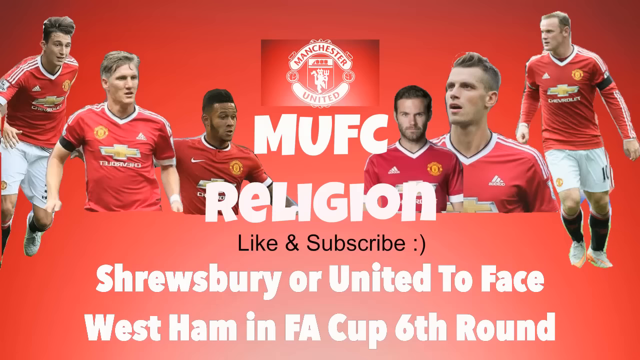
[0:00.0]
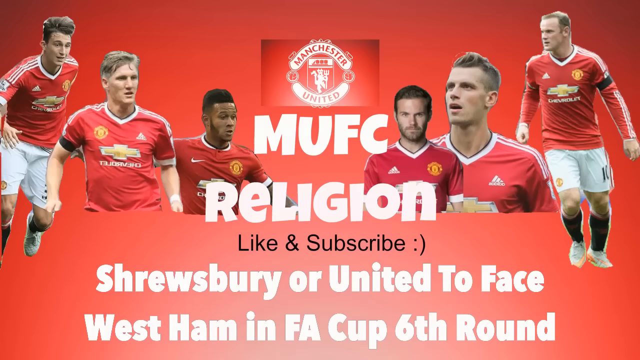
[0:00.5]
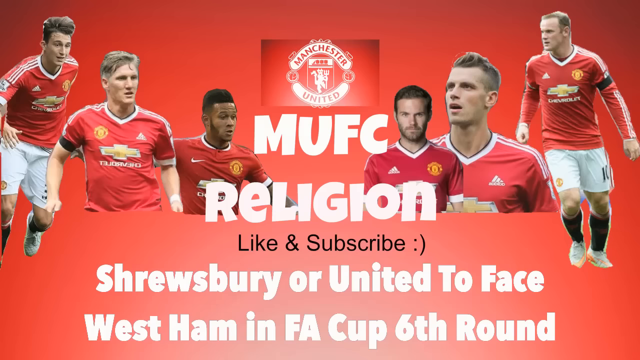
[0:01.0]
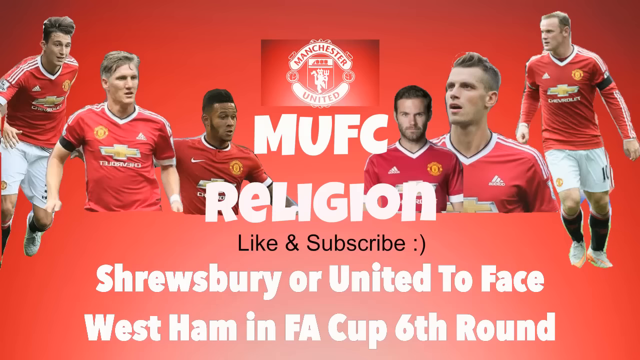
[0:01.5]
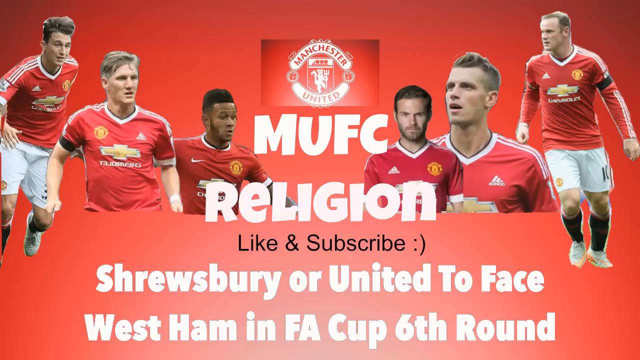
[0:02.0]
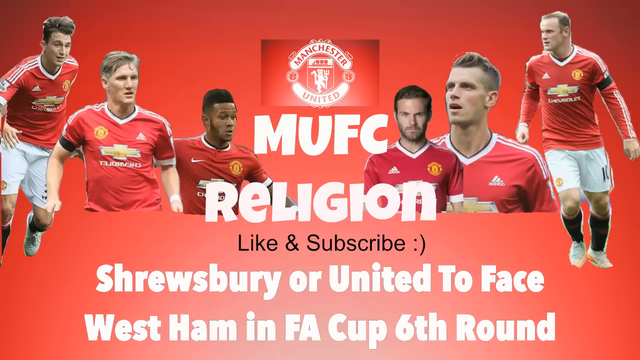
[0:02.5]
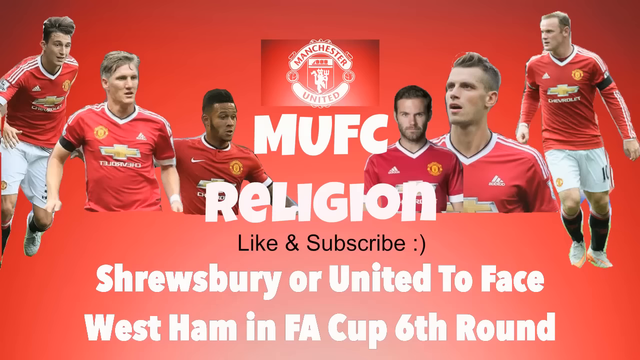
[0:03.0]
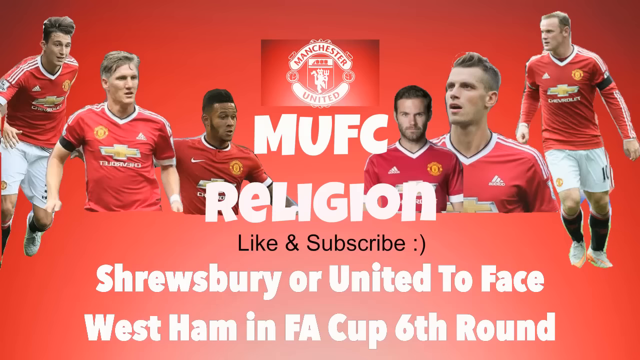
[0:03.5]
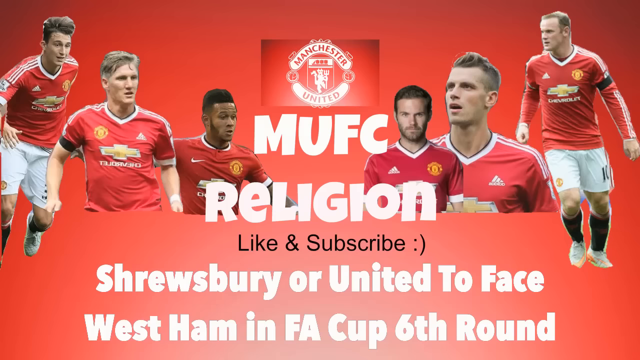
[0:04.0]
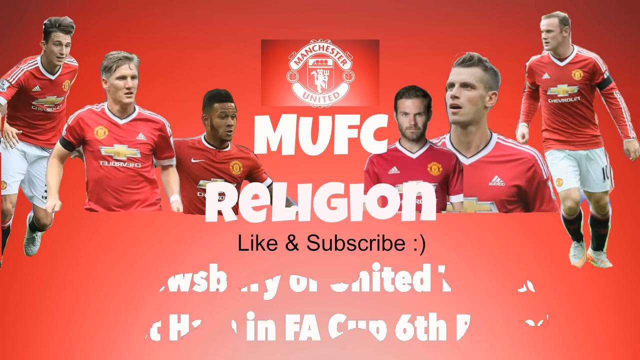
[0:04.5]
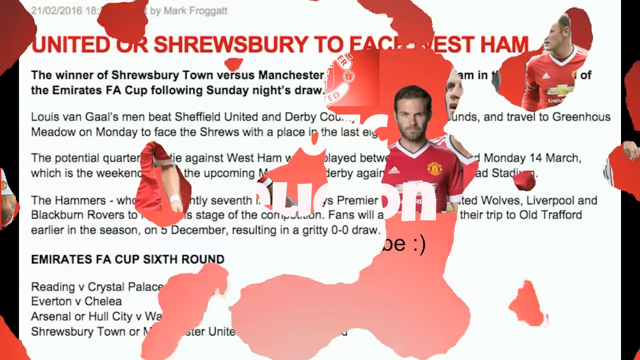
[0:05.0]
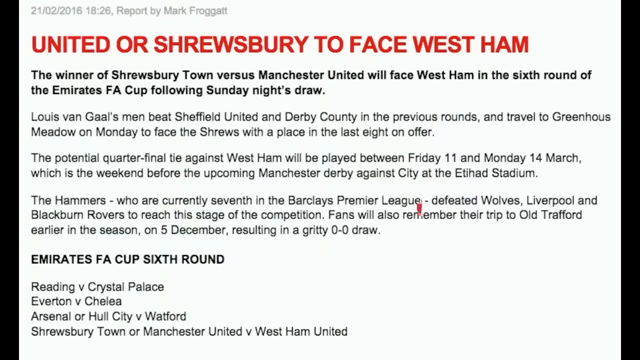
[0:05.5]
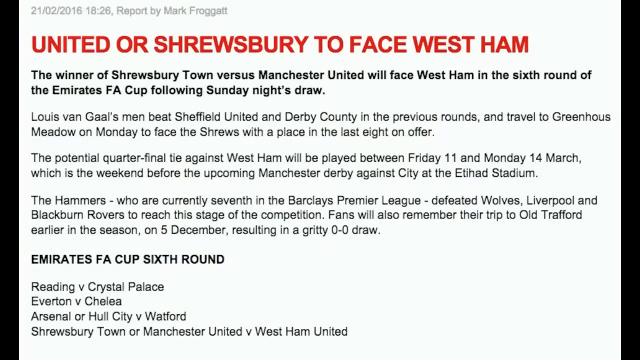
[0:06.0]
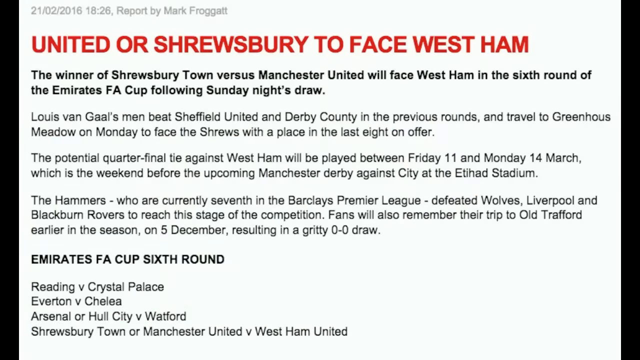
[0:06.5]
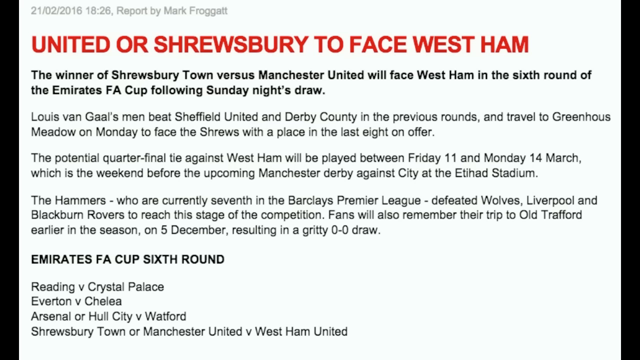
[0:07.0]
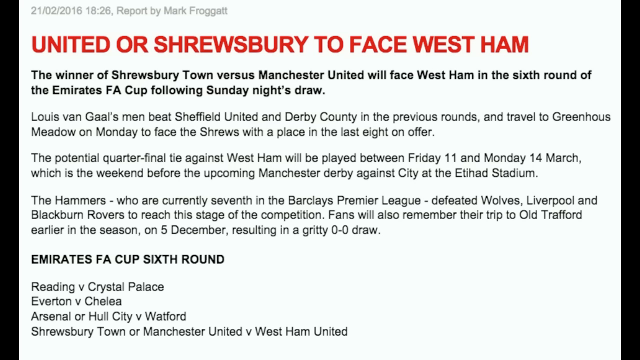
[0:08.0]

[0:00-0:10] What looks like some sort of advertisement, possibly for soccer players, gives way to writing. At the top, red text reads "United or Shrewsbury to face West Ham"; it looks like possibly a newspaper article. In bold letters underneath the red text, it reads "the winner of Shrewsbury Town versus Manchester United will face West Ham in the sixth round of the Emirates FA Cup following Sunday night's draw."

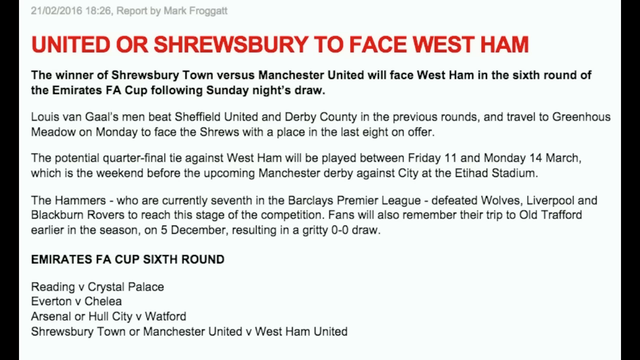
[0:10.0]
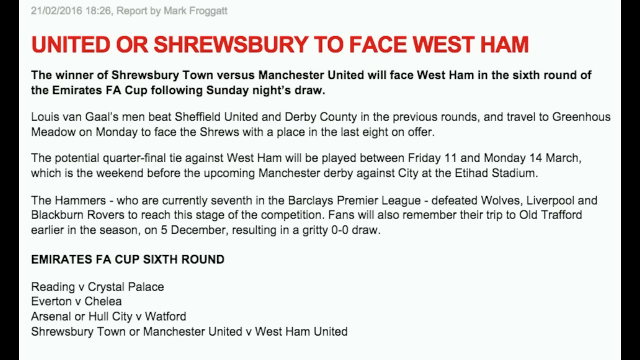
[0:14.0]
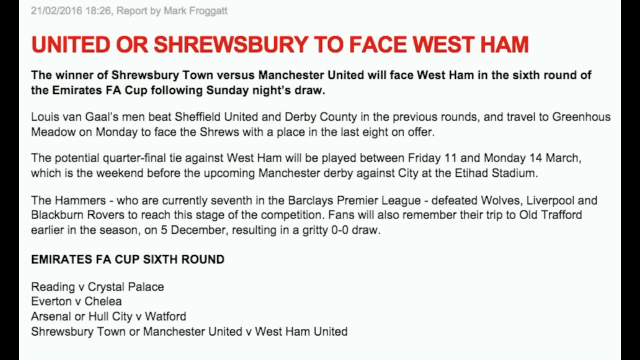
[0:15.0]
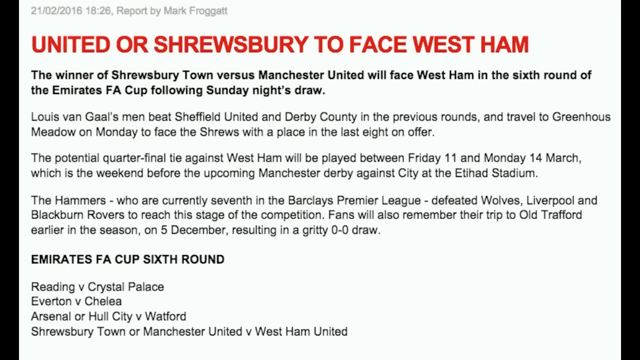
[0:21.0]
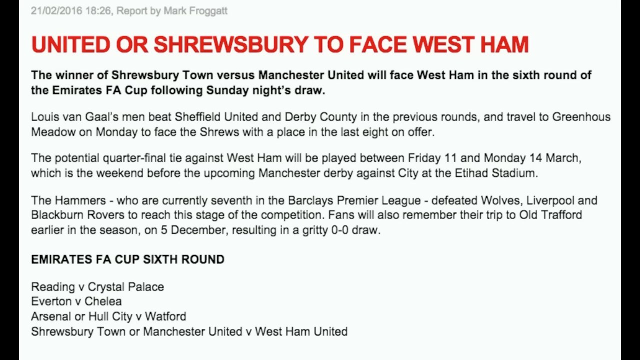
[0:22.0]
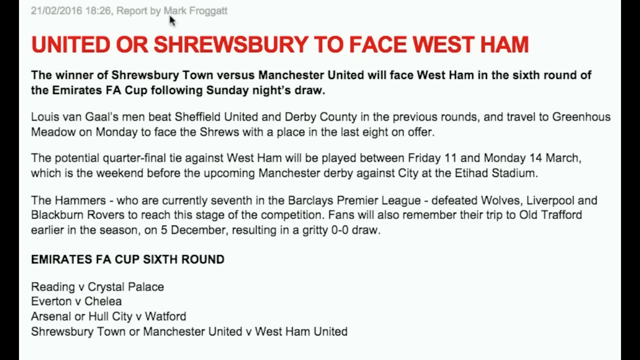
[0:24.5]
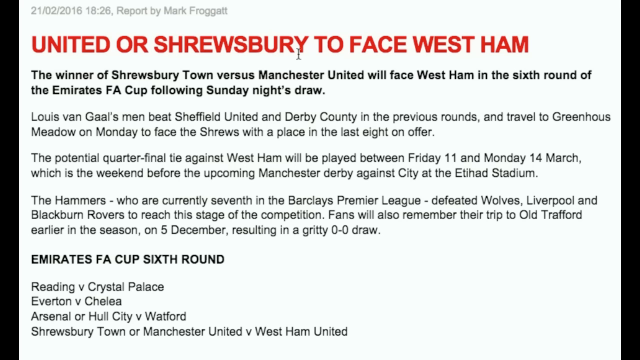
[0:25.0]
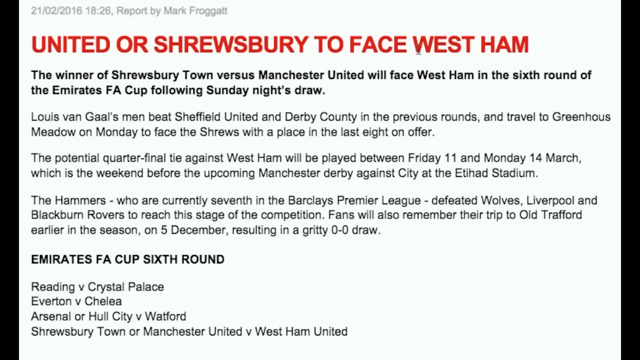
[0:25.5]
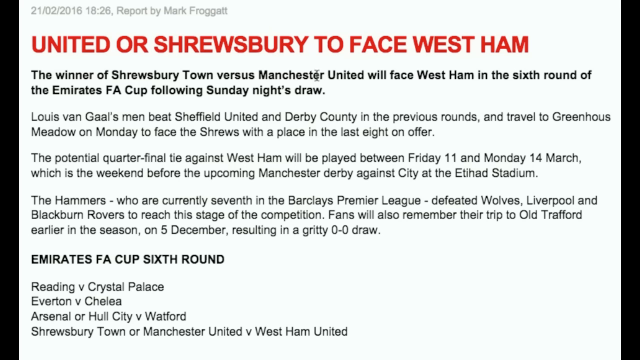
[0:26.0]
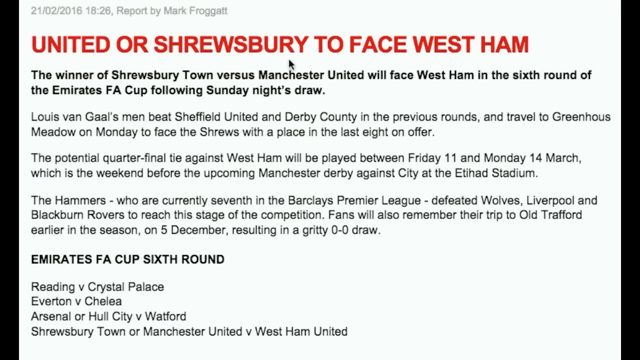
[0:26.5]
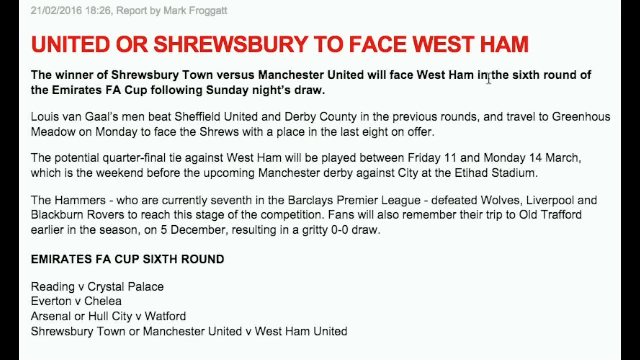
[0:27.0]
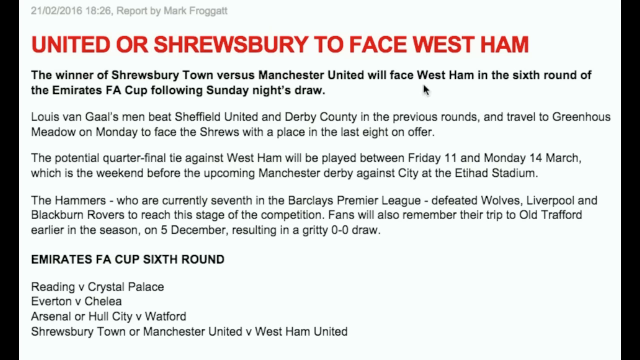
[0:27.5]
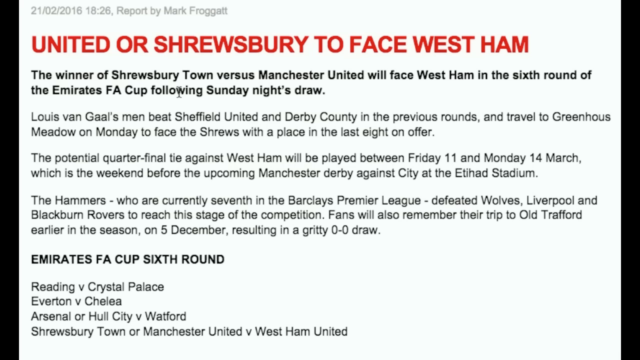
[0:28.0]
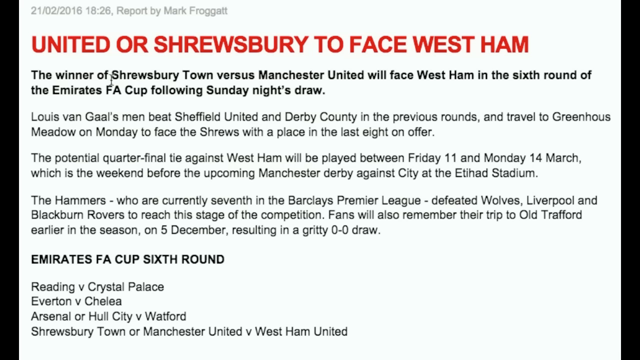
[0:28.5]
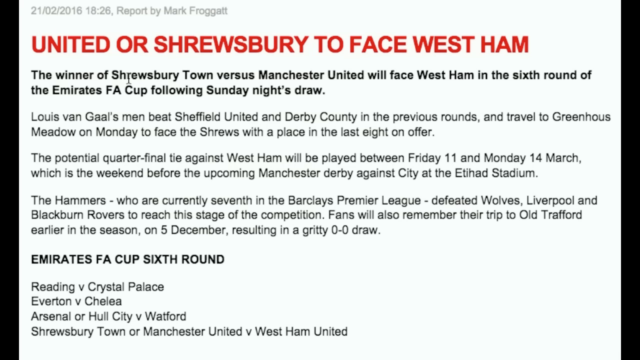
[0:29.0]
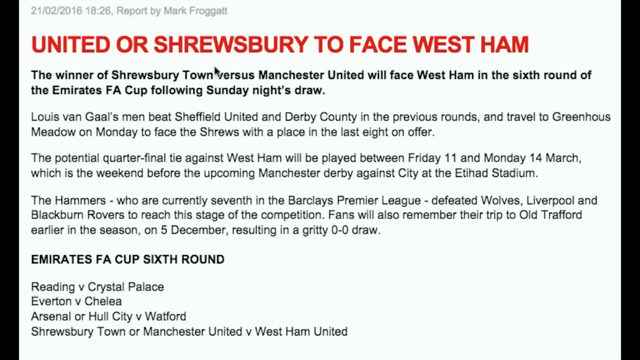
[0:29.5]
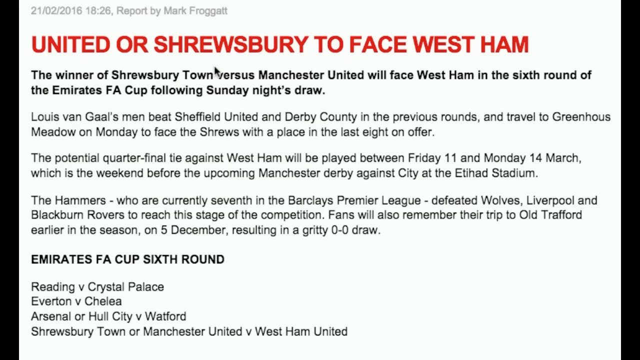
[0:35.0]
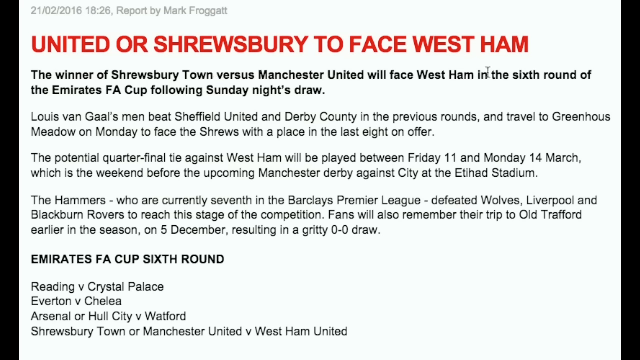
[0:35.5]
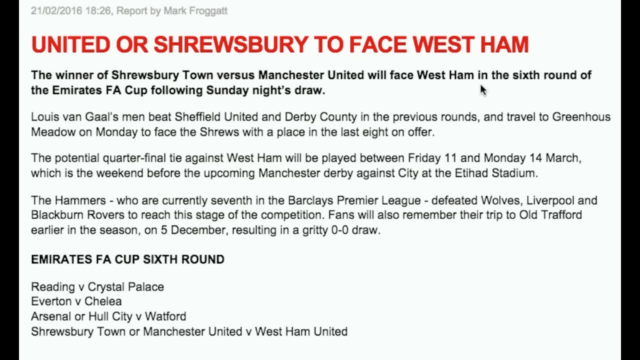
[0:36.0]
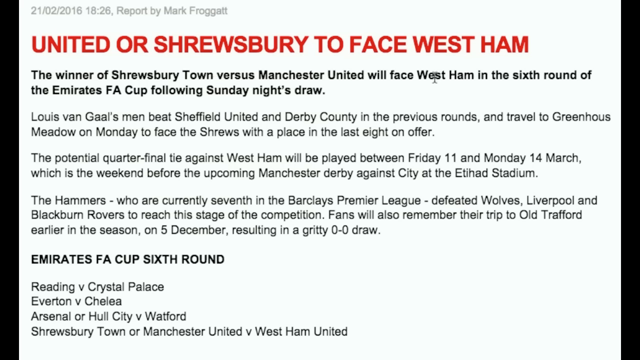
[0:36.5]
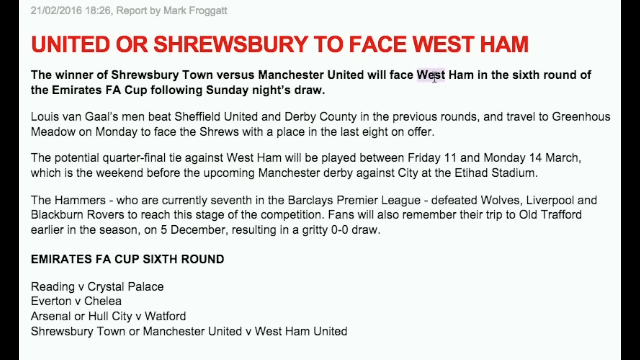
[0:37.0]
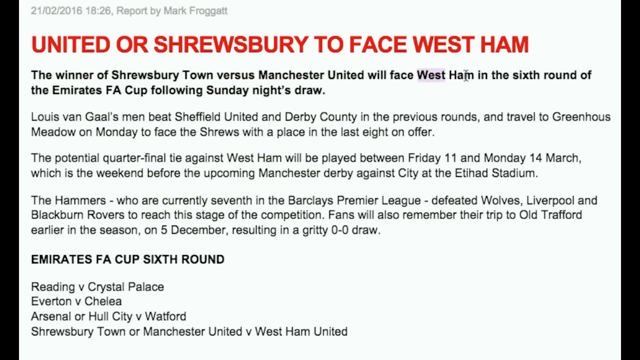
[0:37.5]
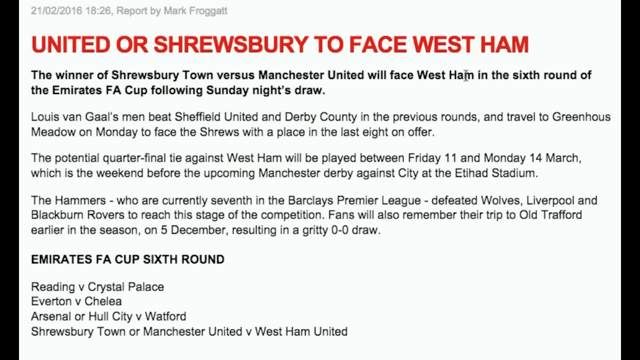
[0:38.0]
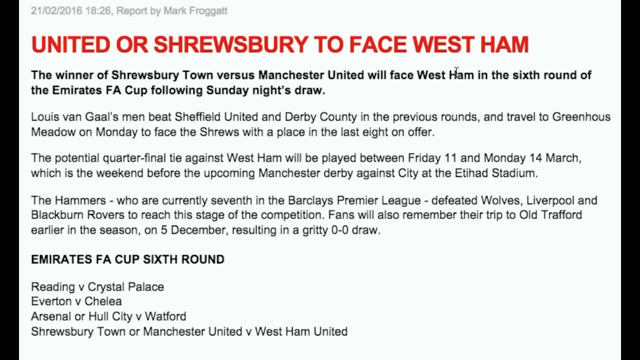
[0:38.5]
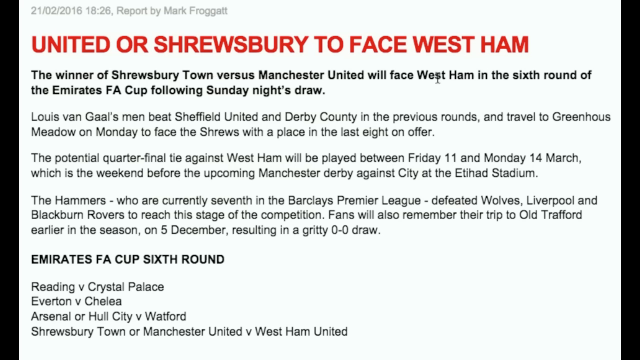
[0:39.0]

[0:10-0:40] Only text is shown. At the very top is grayed-out text with a date, "21-02-2016", what looks like a military time of "18:26", and "reported by Mark Froggatt". Below, in fairly large red text that looks like the headline, it reads "United or Shrewsbury to face West Ham". In bold text under that: "the winner of Shrewsbury Town versus Manchester United will face West Ham in the sixth round of the Emirates FA Cup following Sunday night's draw." Then, in regular text: "Louis Van Gaal's men beat Sheffield United and Derby County in the previous rounds and traveled to Greenhouse Meadow on Monday to face the Shrews with a place in the last eight on offer." A mouse cursor moves over the words as they are read, as if this is a recording of someone's computer screen.